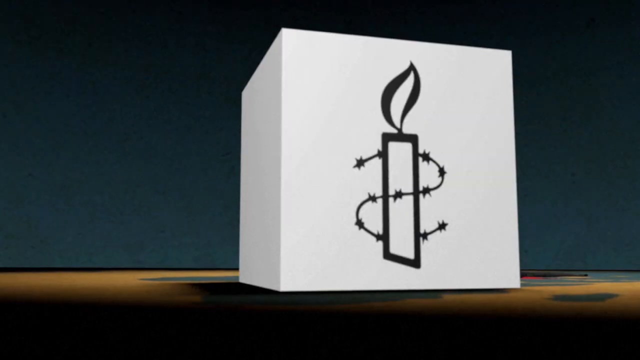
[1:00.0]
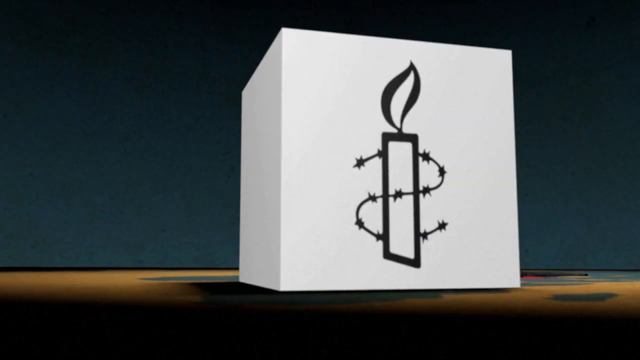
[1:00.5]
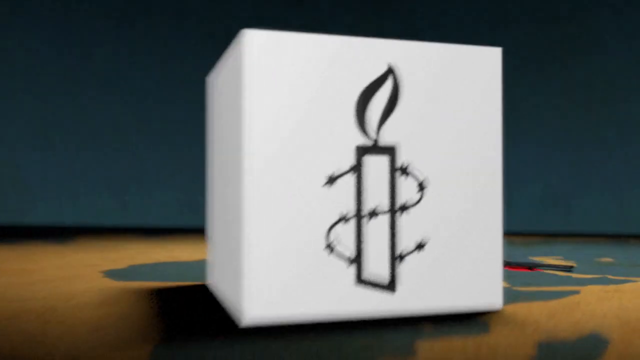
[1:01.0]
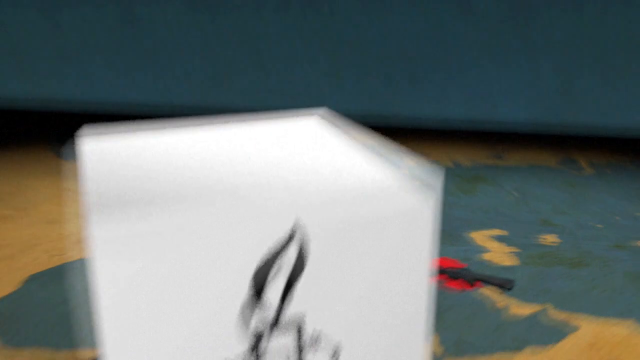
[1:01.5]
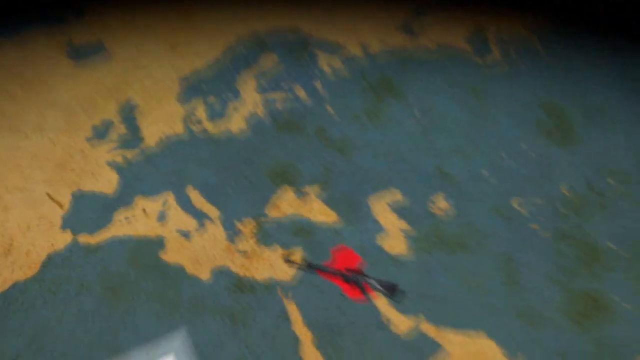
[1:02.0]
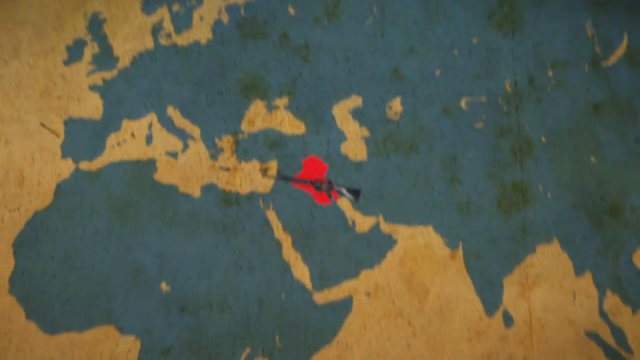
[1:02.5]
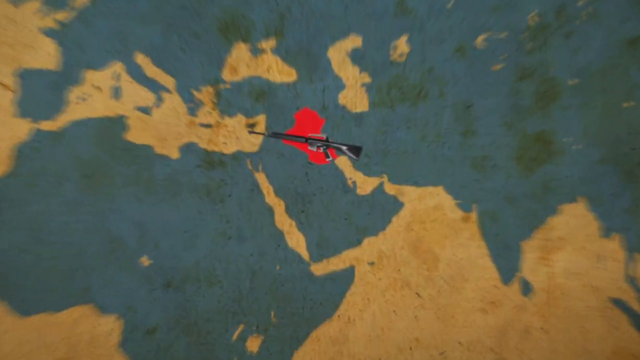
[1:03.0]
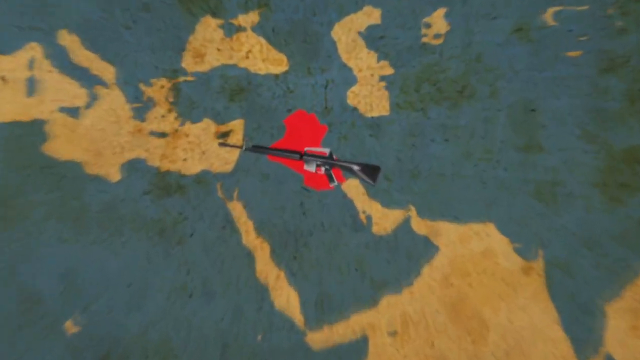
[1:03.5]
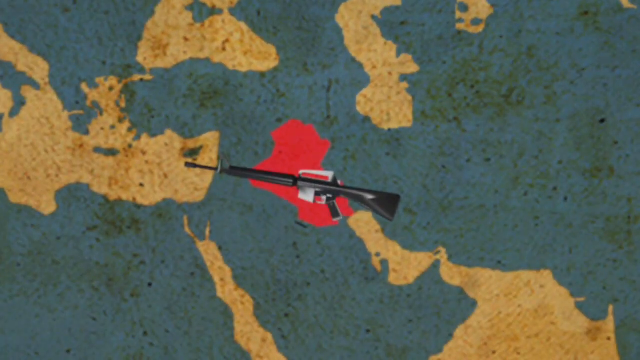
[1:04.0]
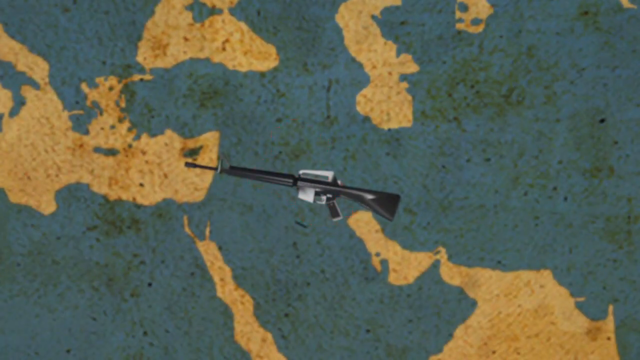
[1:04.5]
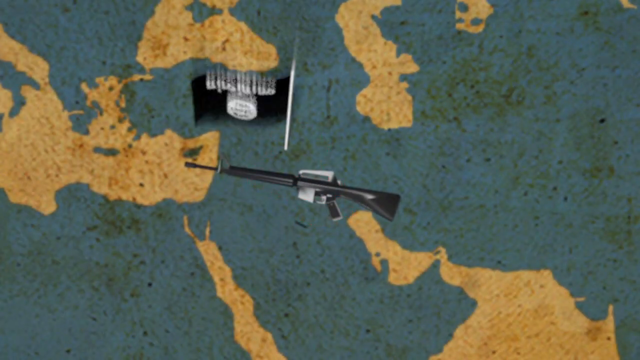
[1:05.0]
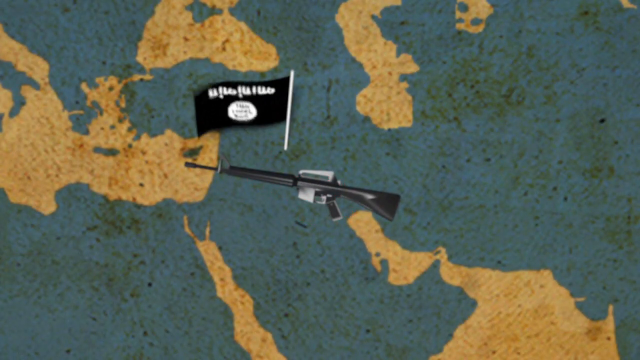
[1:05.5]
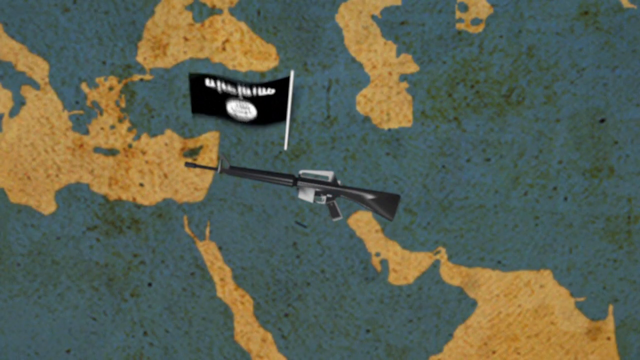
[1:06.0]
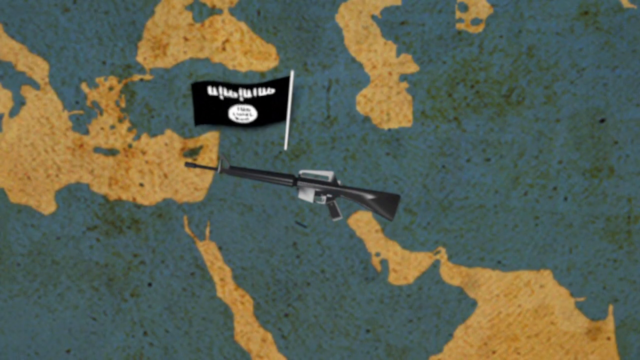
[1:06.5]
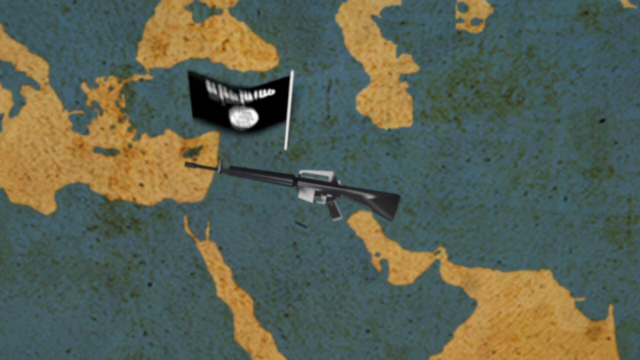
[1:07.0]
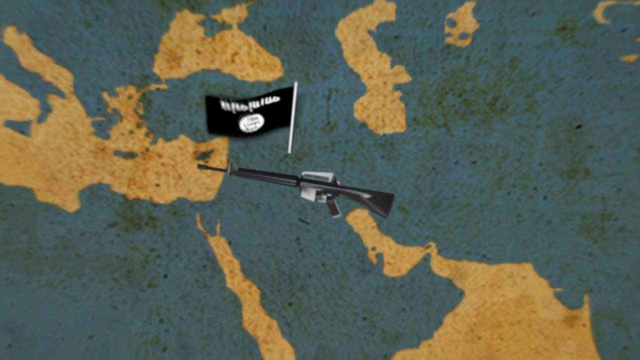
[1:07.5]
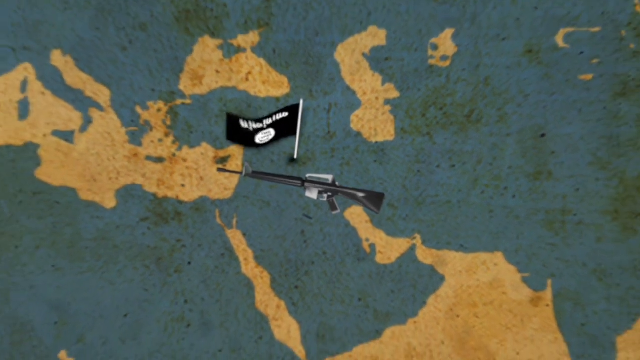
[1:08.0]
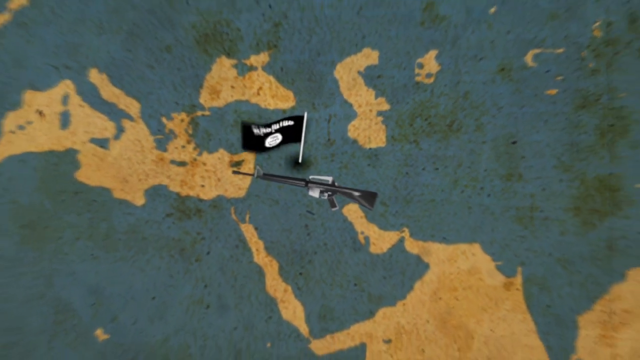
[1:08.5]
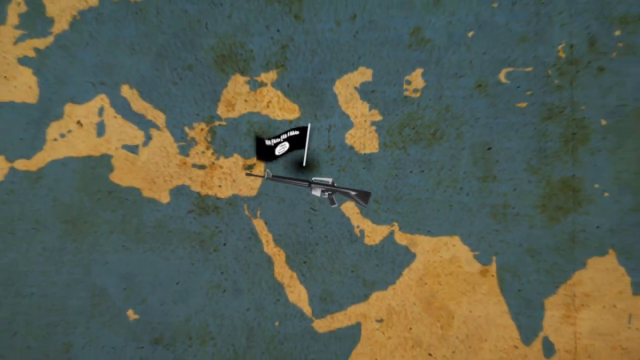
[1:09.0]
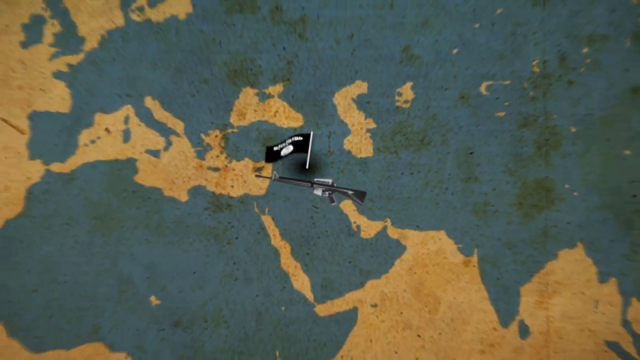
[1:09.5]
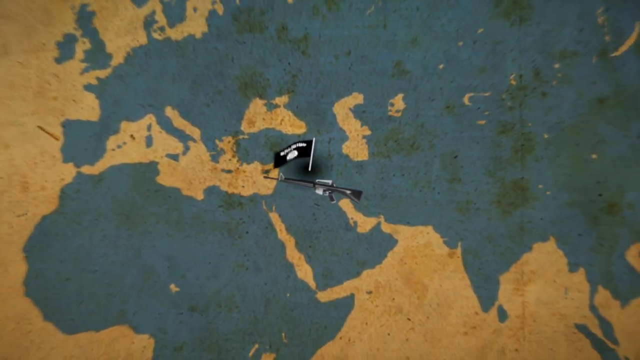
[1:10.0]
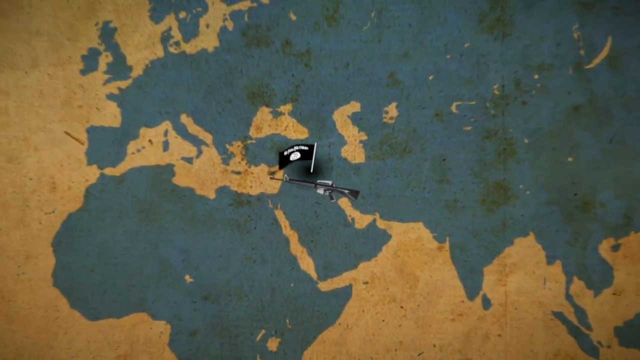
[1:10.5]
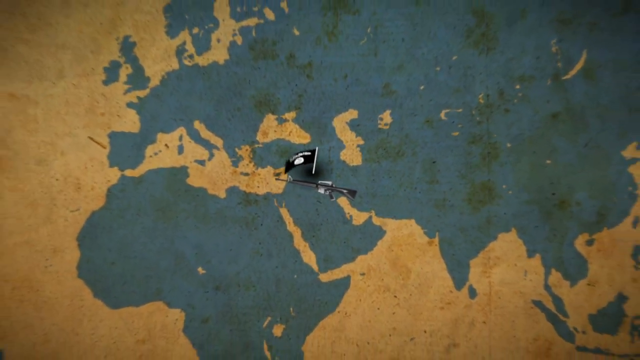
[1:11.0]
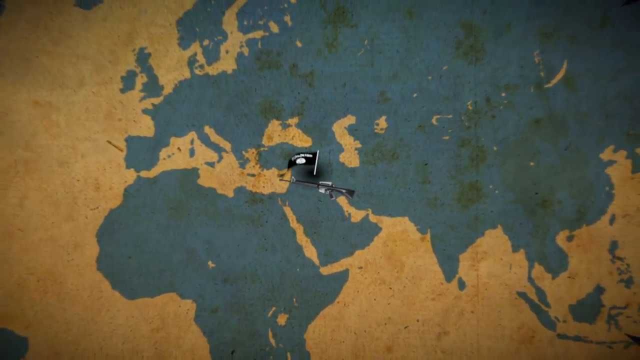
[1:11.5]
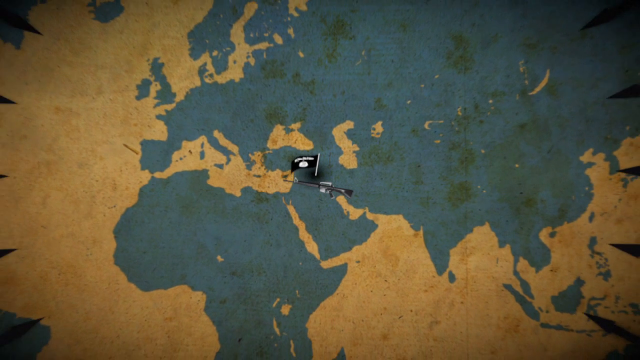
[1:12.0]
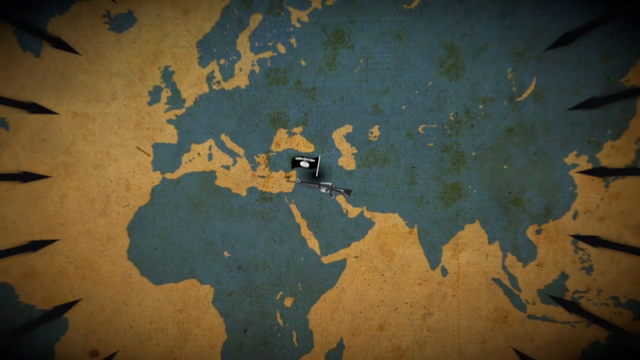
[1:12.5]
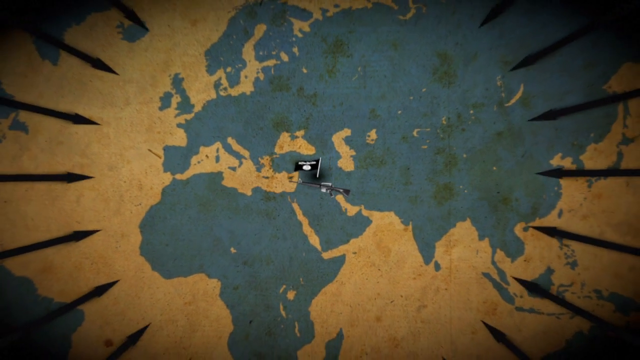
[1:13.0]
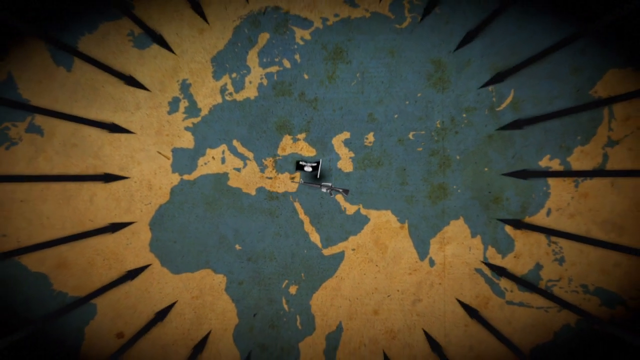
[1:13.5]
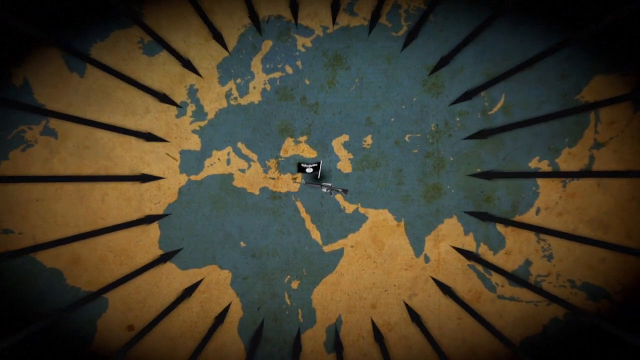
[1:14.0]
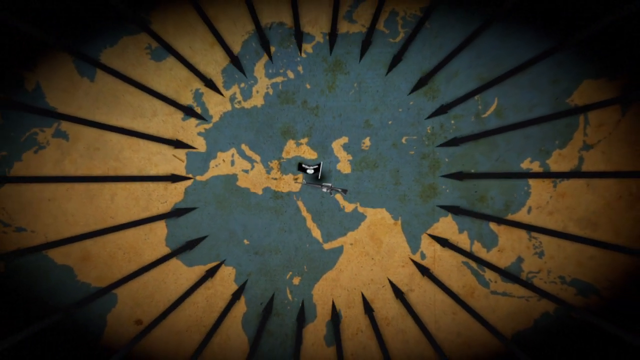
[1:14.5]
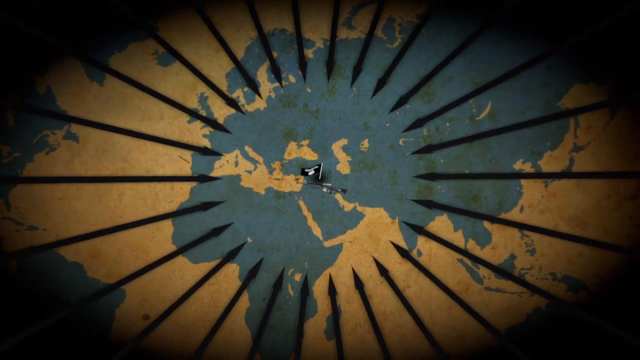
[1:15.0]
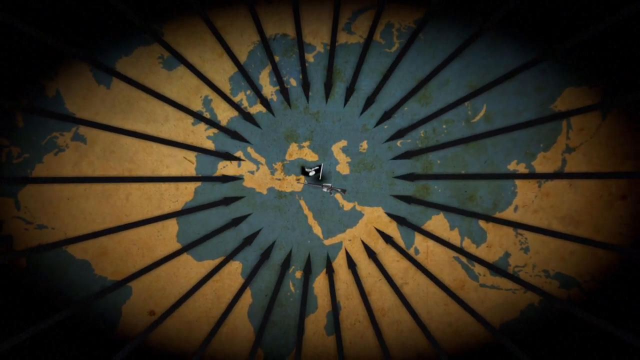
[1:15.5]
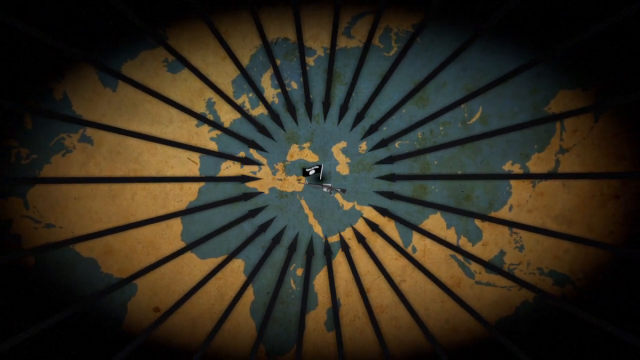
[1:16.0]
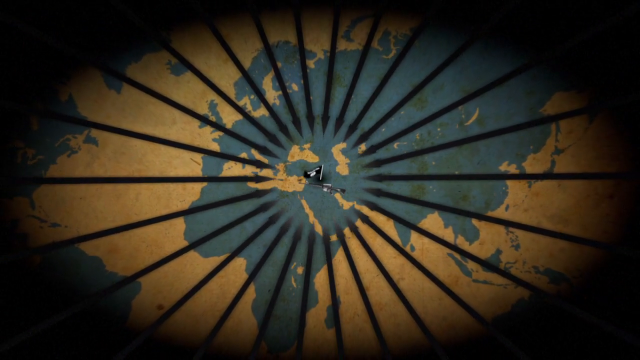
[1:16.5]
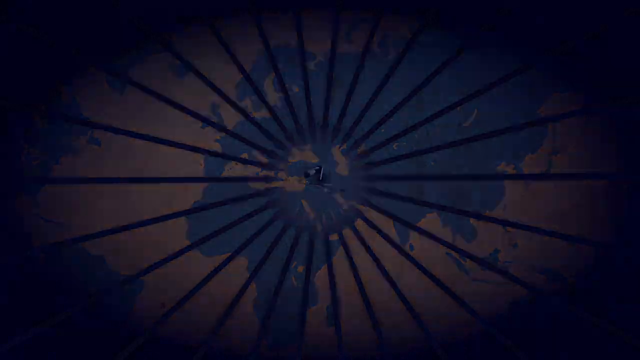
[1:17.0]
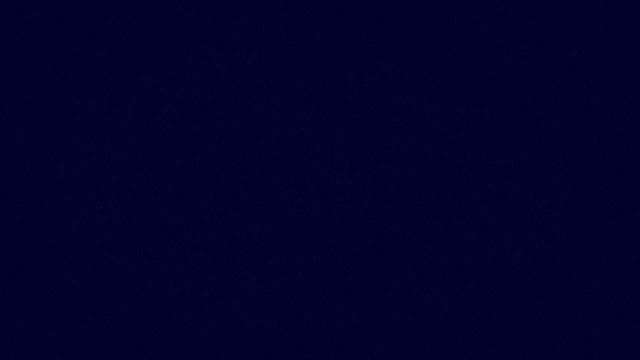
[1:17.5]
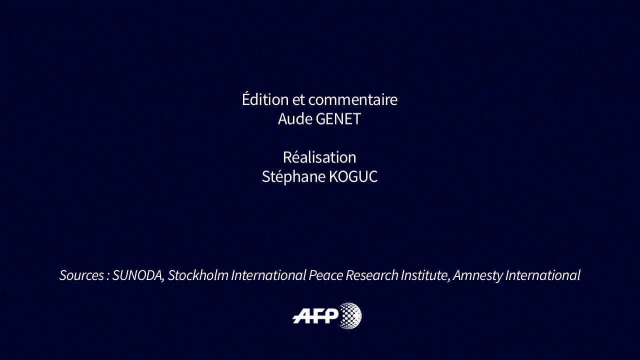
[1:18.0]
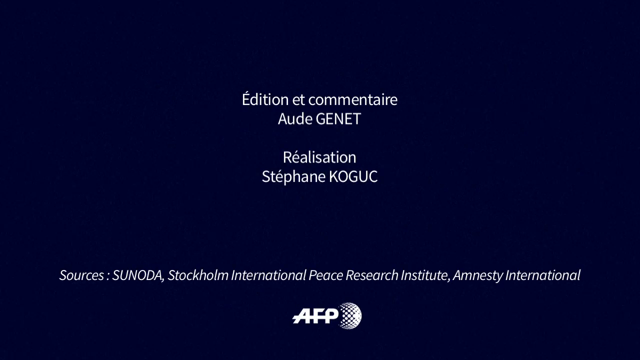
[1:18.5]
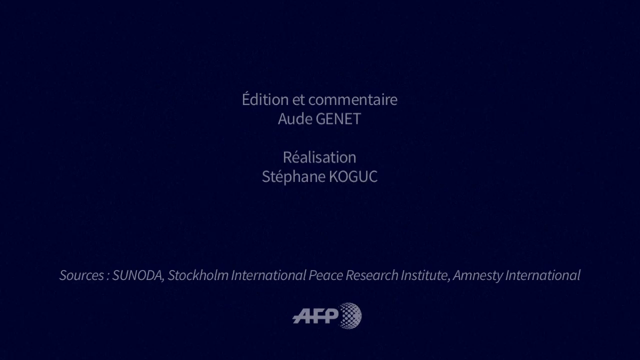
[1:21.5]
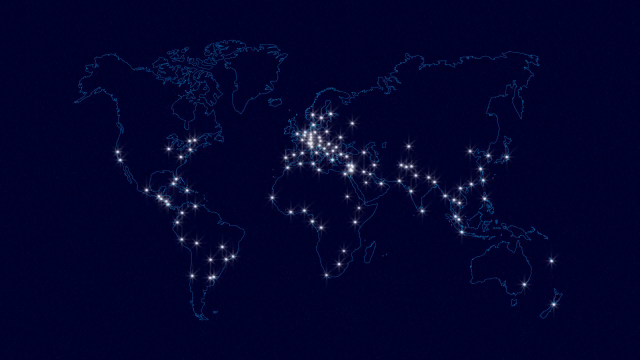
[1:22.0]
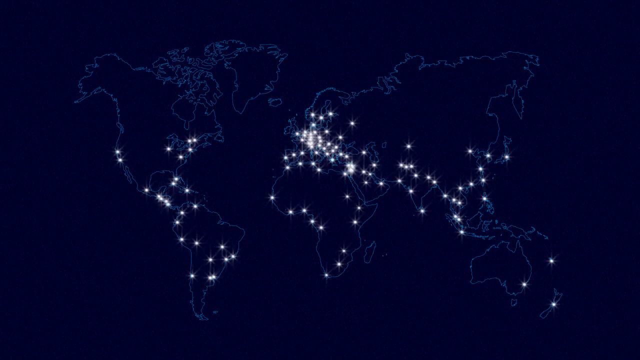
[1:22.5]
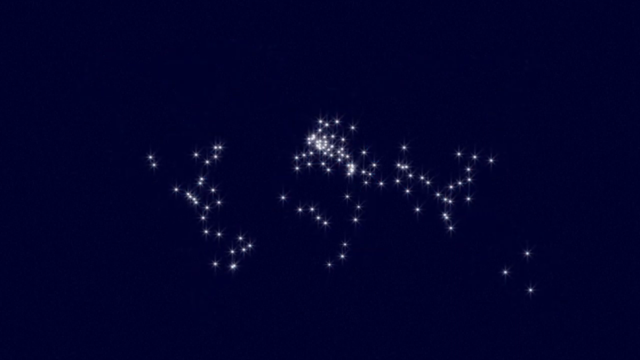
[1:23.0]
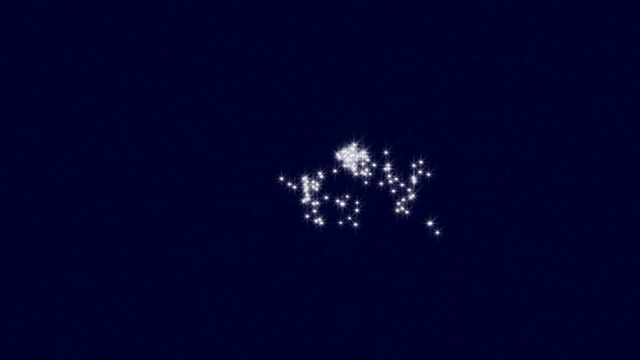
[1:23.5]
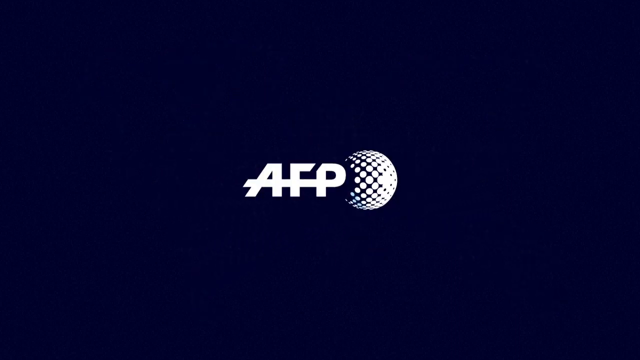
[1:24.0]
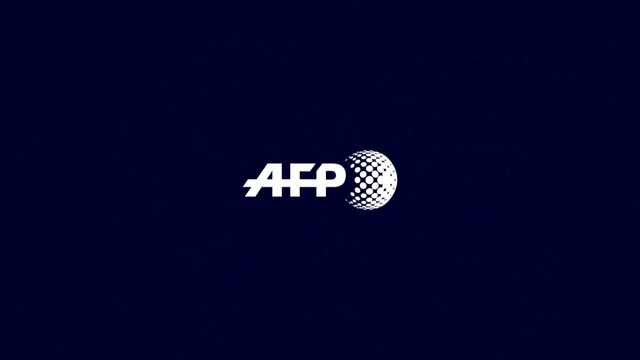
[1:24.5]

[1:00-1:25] A bright box has a candle drawn in black on it, along with what looks kind of like an upside-down S with some stars on it. It cuts to a map that looks blue and brown; the blue parts are the land and the brown parts are the lakes and oceans. There is a red part on the land, and on top of it is a black assault rifle. A black flag then lands on top of the red piece of land, and the red highlighted part disappears. Only the flag is visible, waving, with white text on it. The camera zooms out, and a whole bunch of black arrows point toward it.